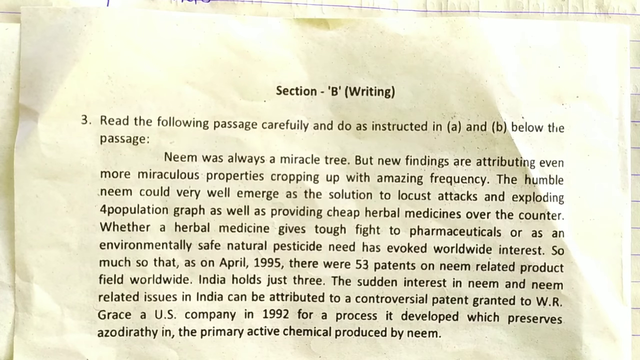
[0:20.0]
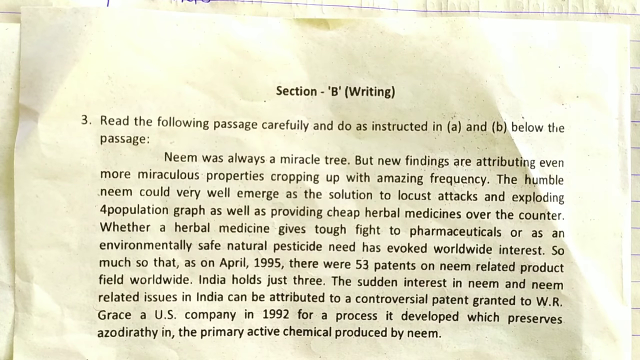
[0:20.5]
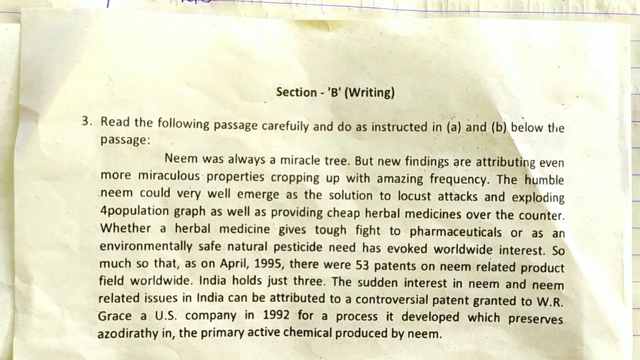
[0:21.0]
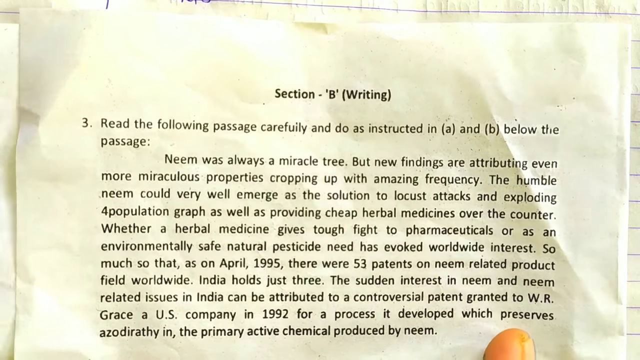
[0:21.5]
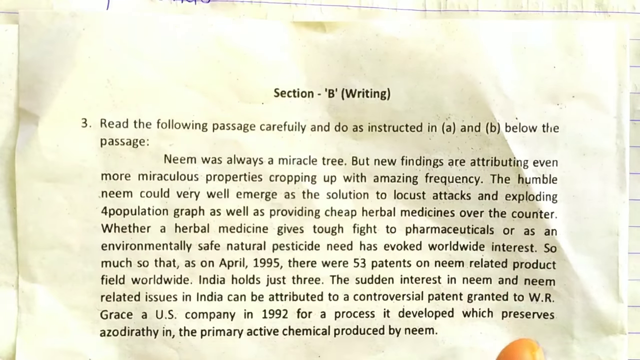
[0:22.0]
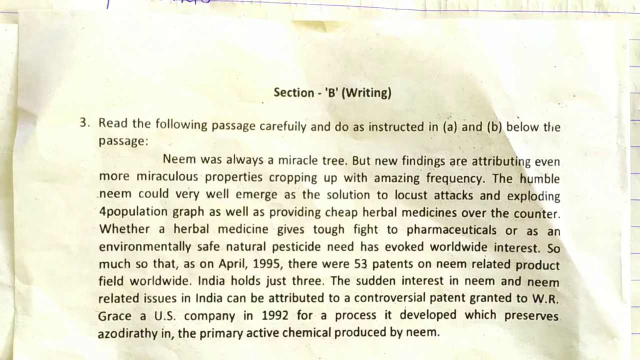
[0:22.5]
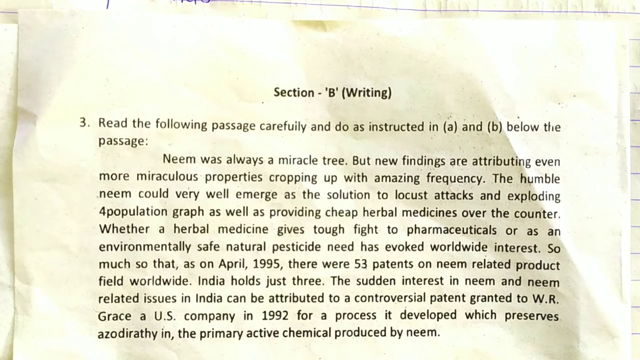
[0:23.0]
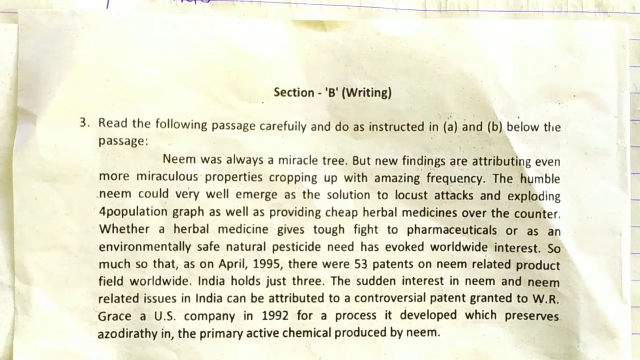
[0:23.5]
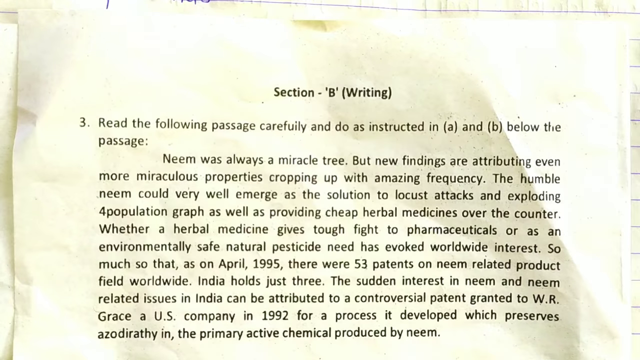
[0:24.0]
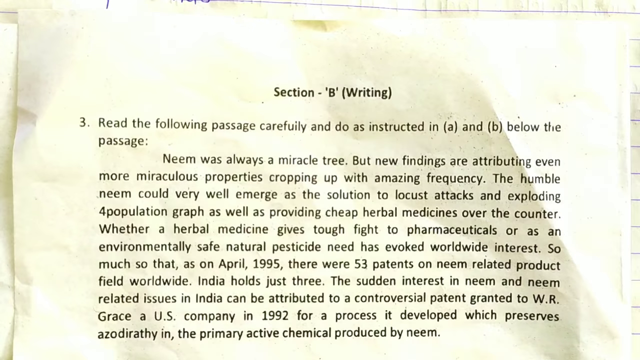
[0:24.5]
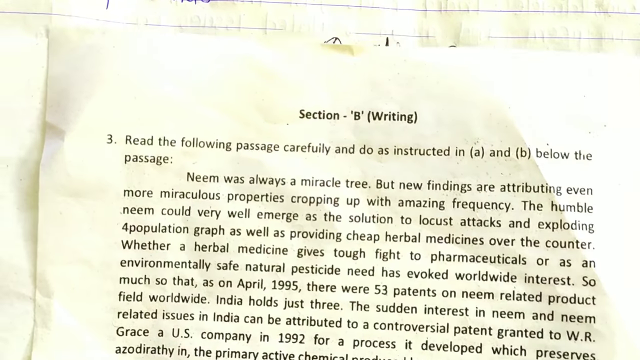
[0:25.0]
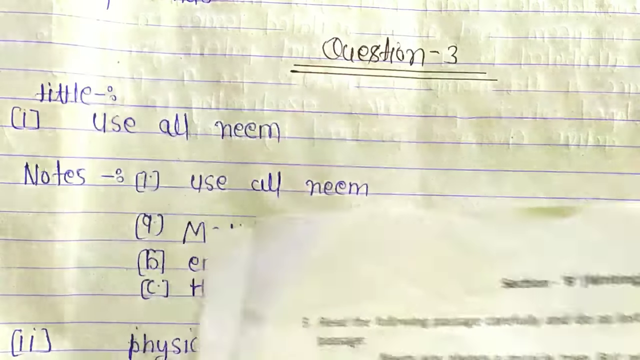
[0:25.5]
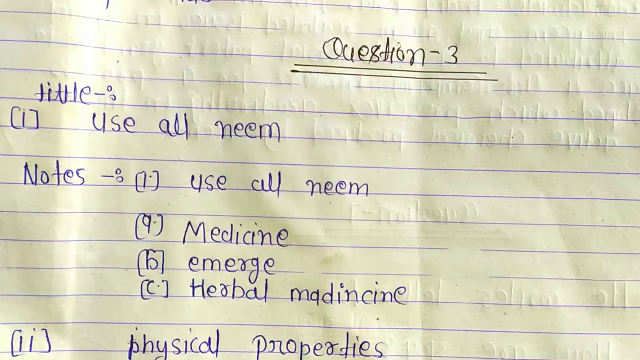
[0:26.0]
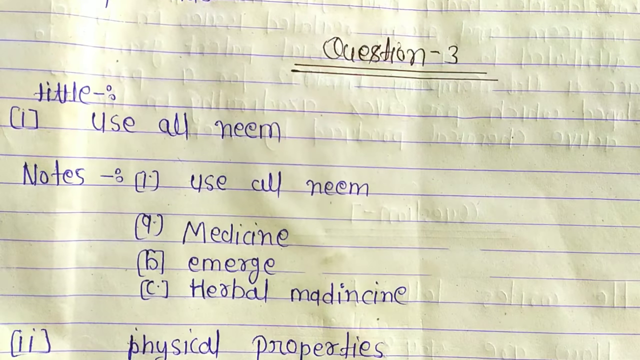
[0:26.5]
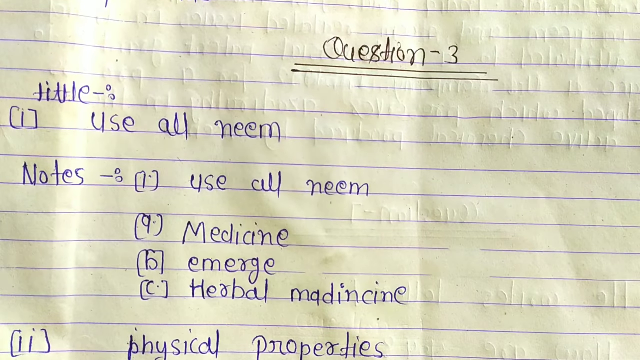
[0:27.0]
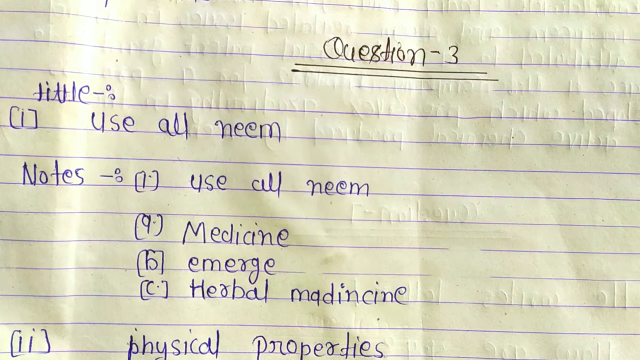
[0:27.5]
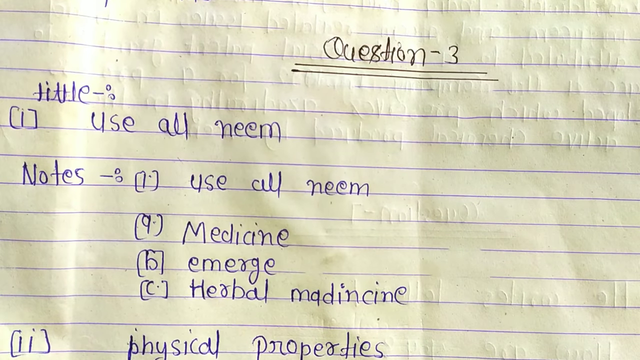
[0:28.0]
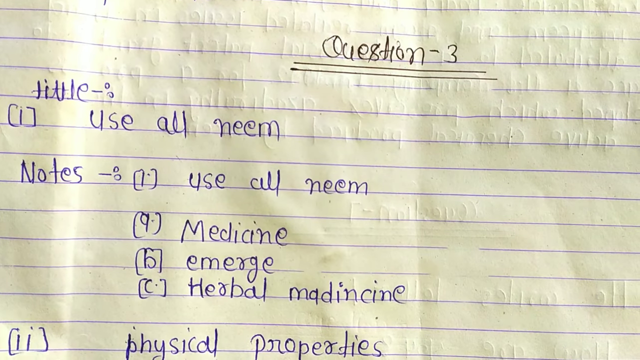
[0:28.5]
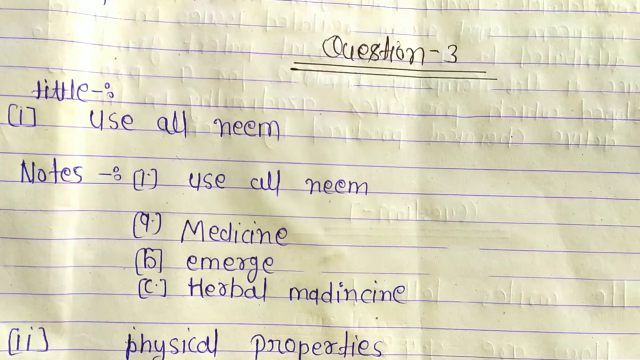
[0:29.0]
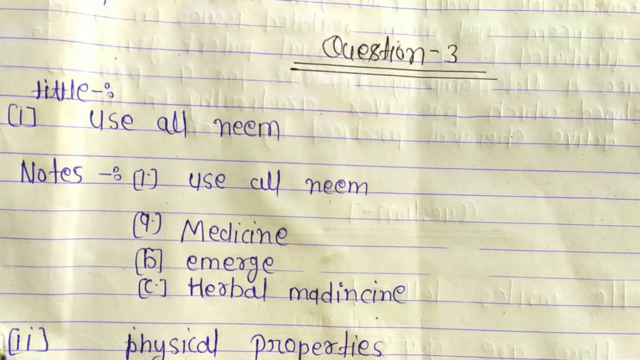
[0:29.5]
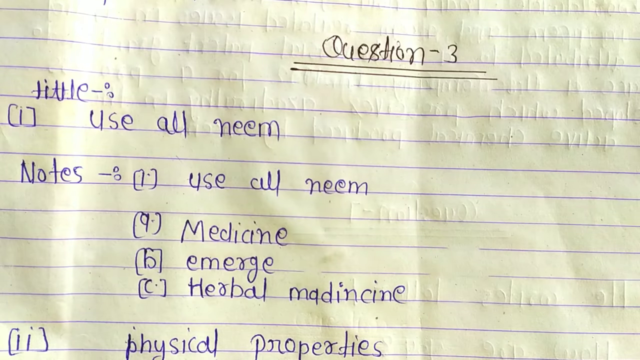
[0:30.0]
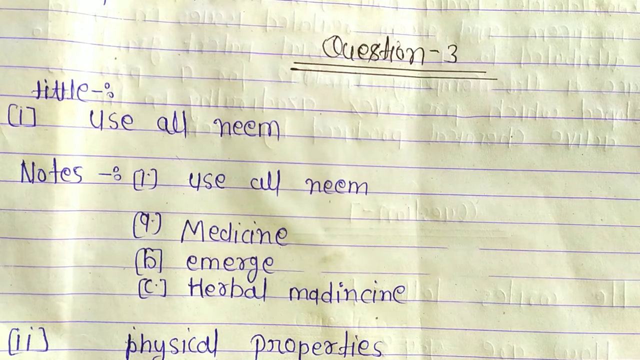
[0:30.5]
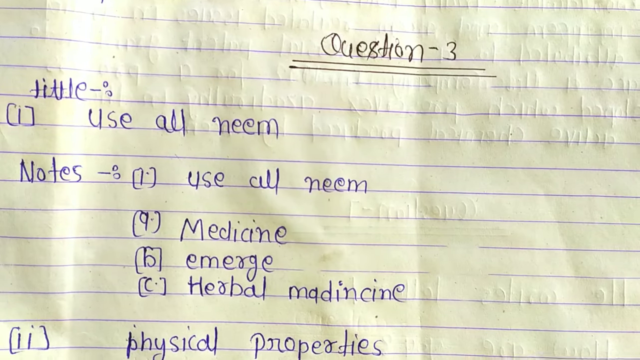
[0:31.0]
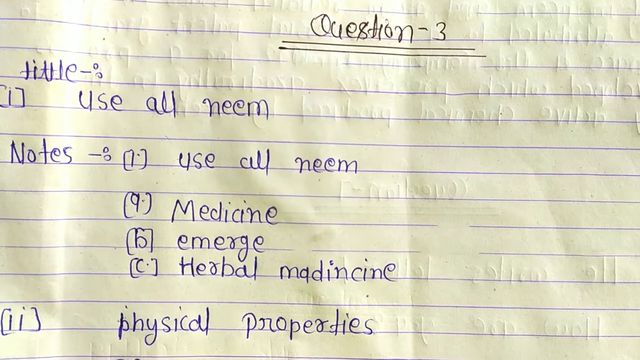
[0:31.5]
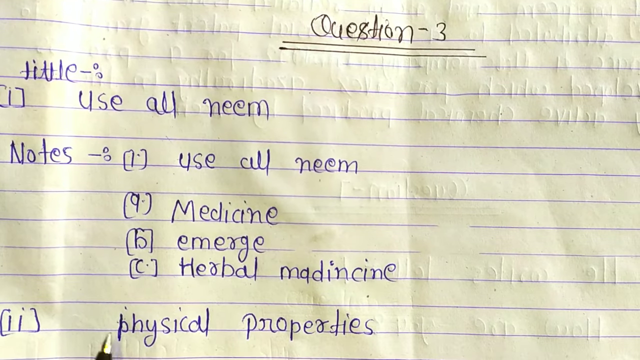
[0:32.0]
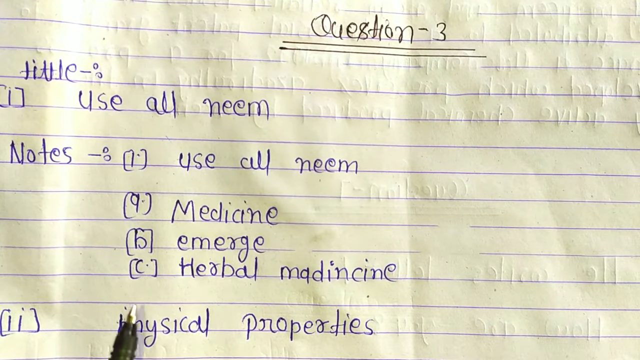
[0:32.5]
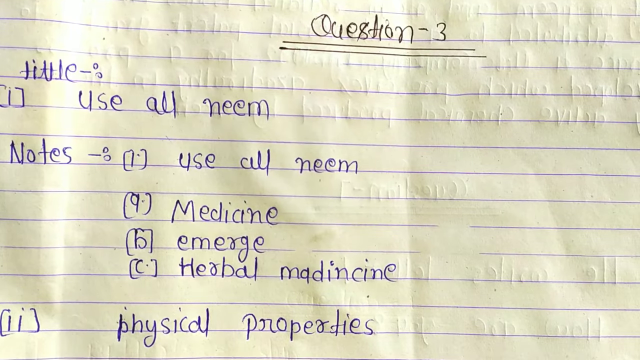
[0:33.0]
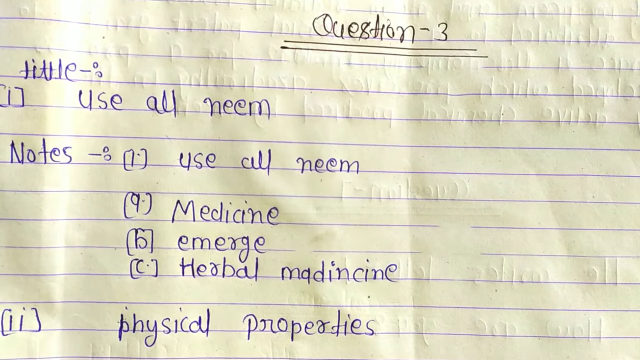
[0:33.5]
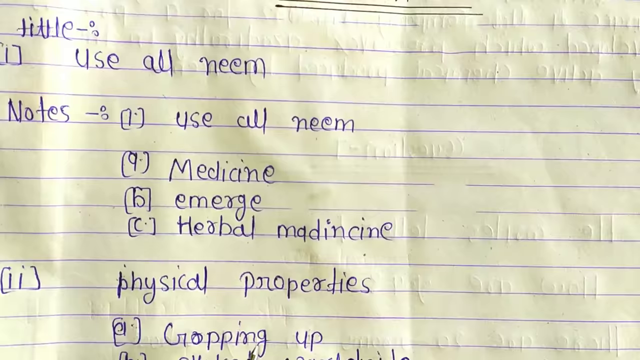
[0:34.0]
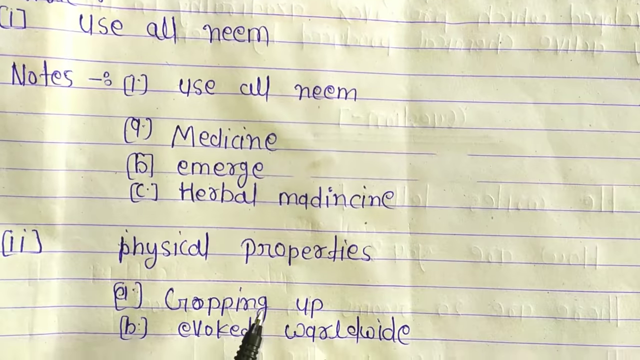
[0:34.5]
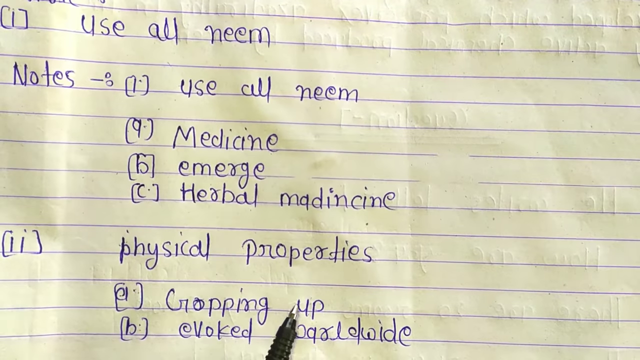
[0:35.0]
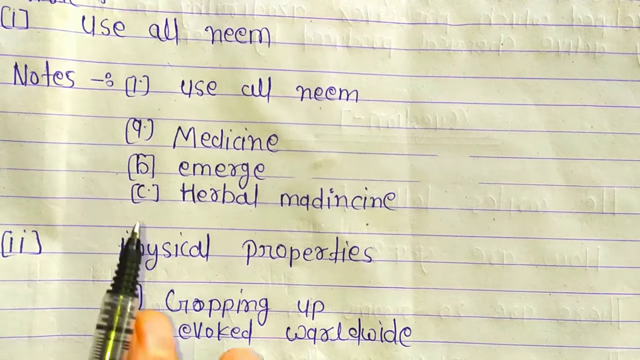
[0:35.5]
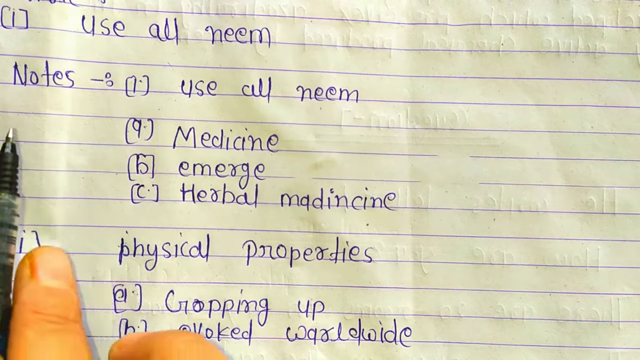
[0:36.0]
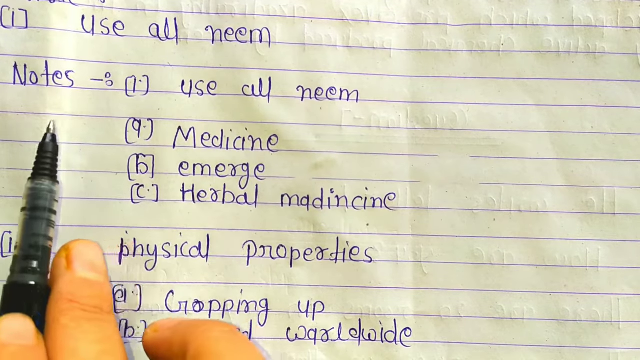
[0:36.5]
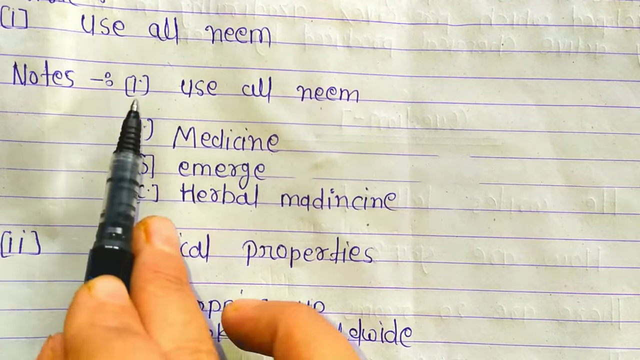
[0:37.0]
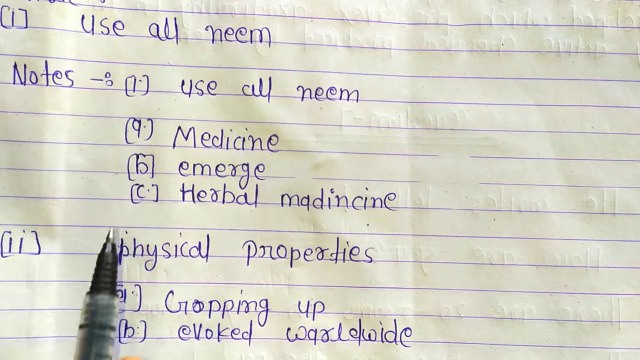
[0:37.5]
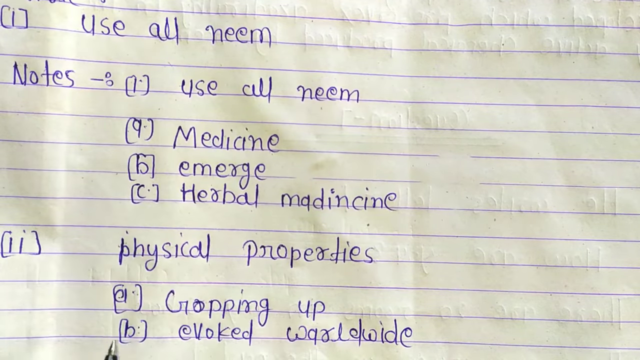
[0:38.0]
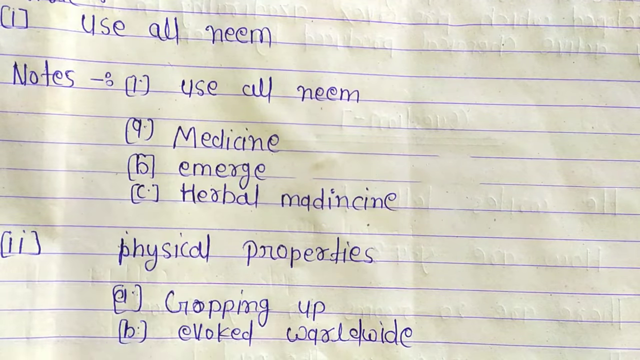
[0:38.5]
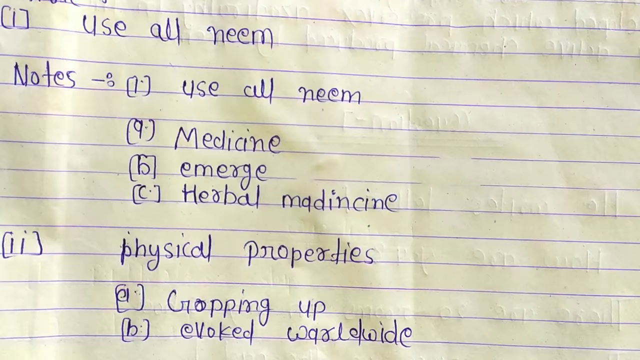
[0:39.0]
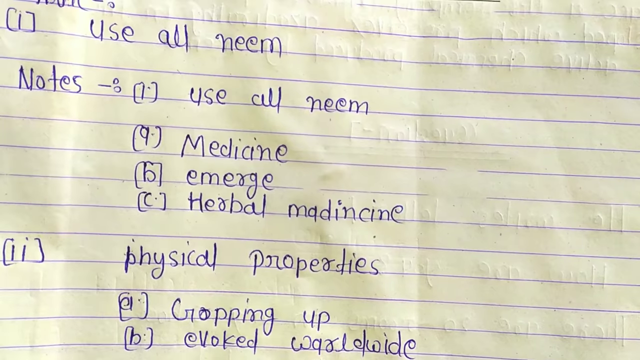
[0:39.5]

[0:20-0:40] A sheet of paper with a few wrinkles has writing on it. At the top it reads "section-B" with "write in" in parentheses, then a "3", and "read the following passage carefully and do as instructed in (A) and (B) below the passage." The passage reads "Neem, N-E-E-M, was always a miracle tree. But new findings are attributing even more miraculous properties cropping up with amazing frequency. The humble N-E-E-M could very well emerge as the solution to locust attacks and exploding" and continues with "population graph as well as providing cheap herbal medicines over the counter. Whether a herbal medicine gives a tough fight", followed by more wording. Then the notes appear, reading "question three", "title, use or neem" and "notes", with "medicine", "emerge", "herbal medicine" and "physical properties". The passage on the paper then comes back up, mentioning a safe natural pesticide and 53 patents on this tree since 1995.